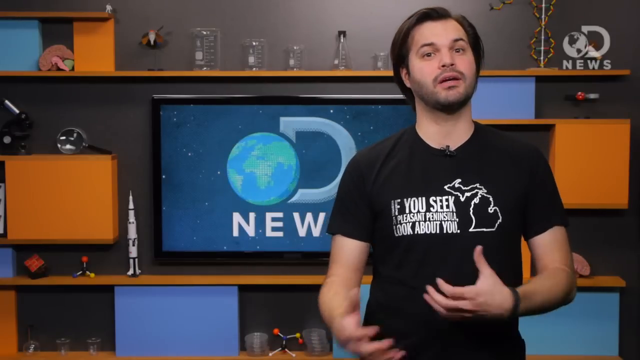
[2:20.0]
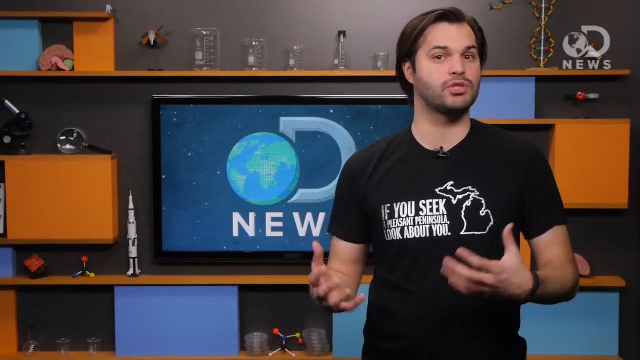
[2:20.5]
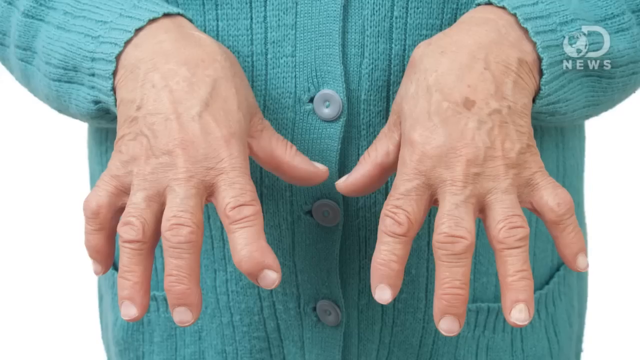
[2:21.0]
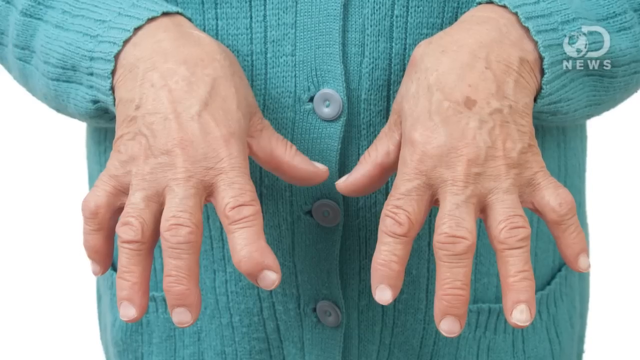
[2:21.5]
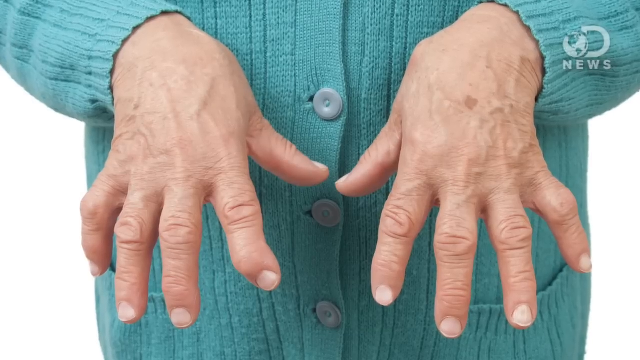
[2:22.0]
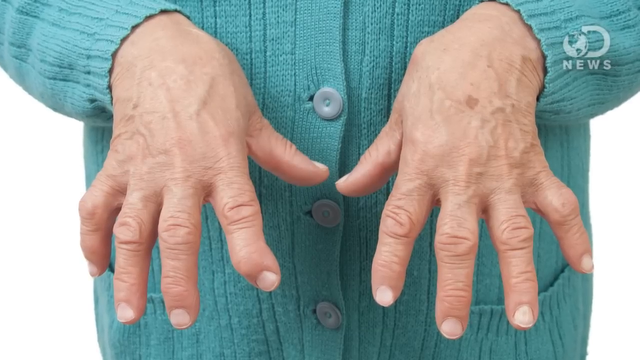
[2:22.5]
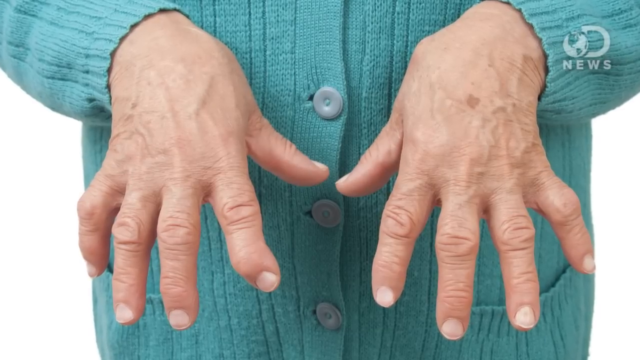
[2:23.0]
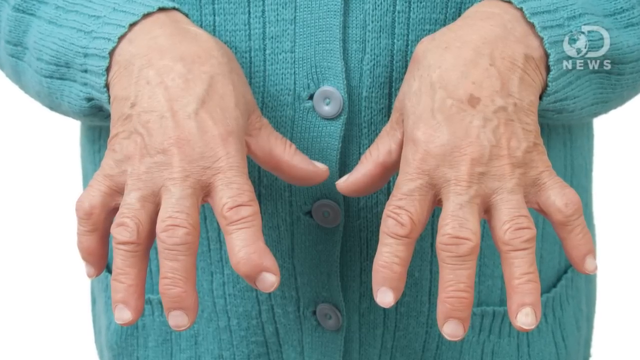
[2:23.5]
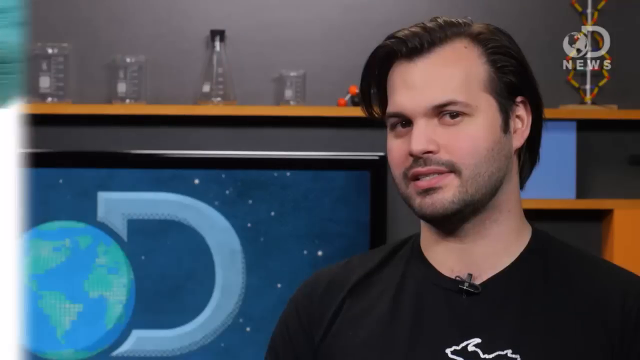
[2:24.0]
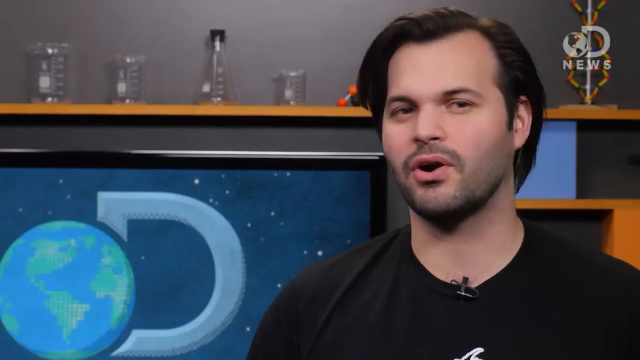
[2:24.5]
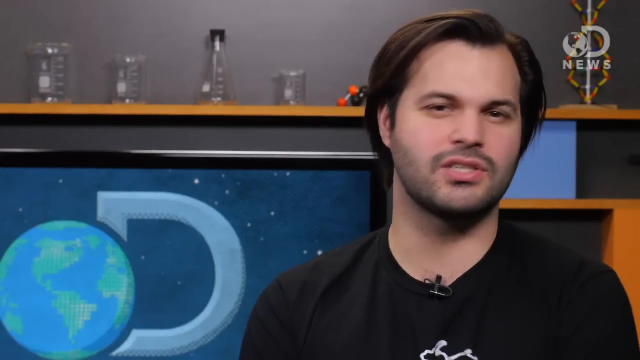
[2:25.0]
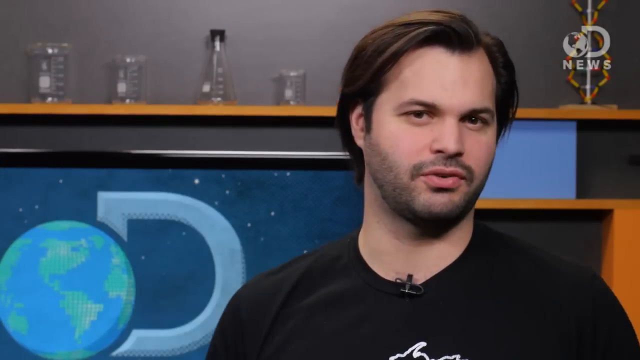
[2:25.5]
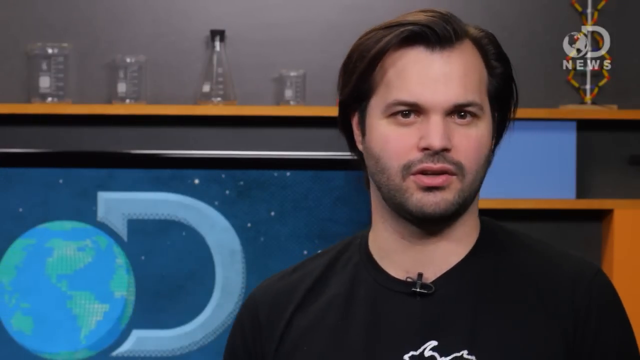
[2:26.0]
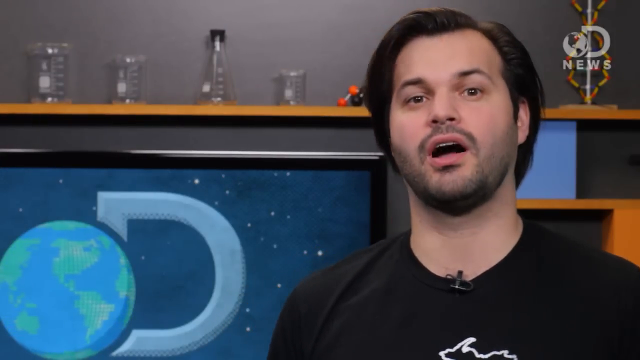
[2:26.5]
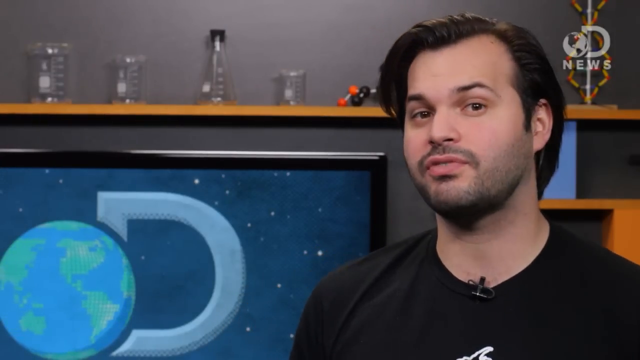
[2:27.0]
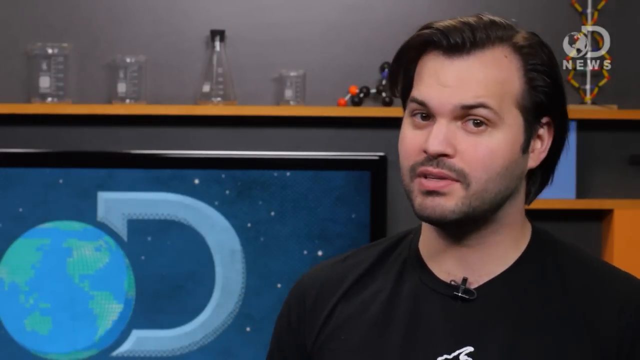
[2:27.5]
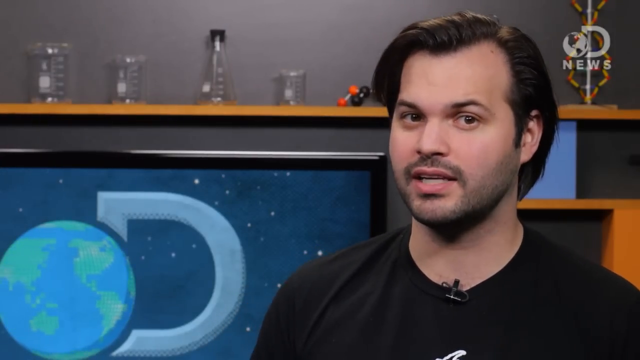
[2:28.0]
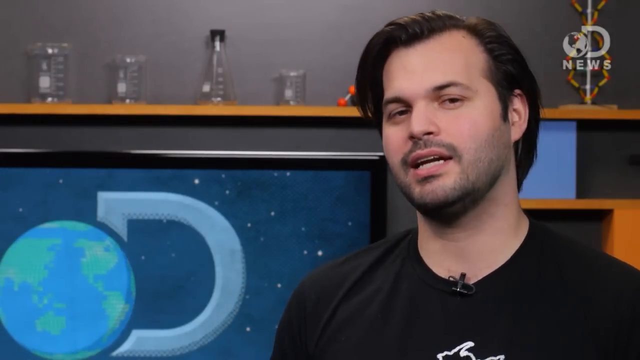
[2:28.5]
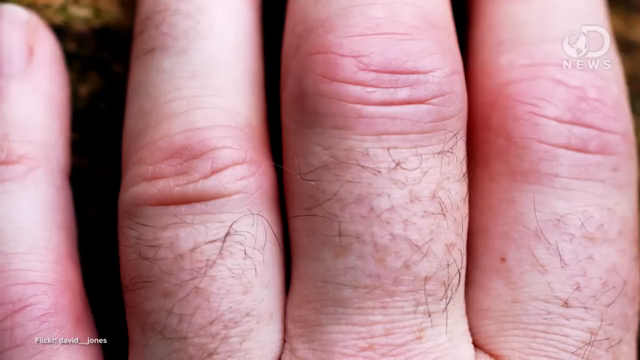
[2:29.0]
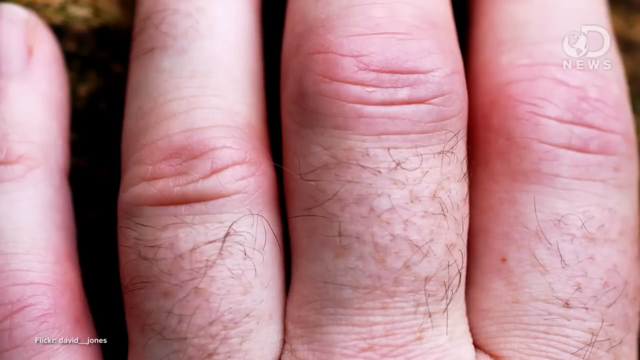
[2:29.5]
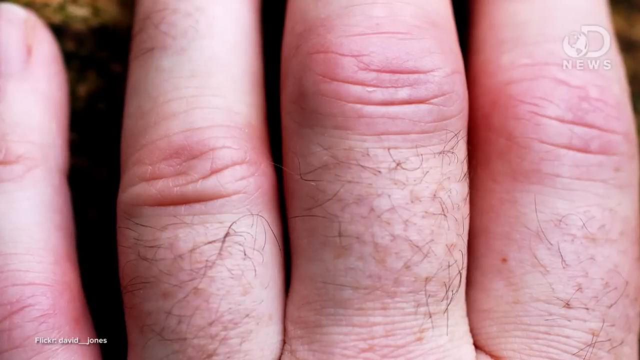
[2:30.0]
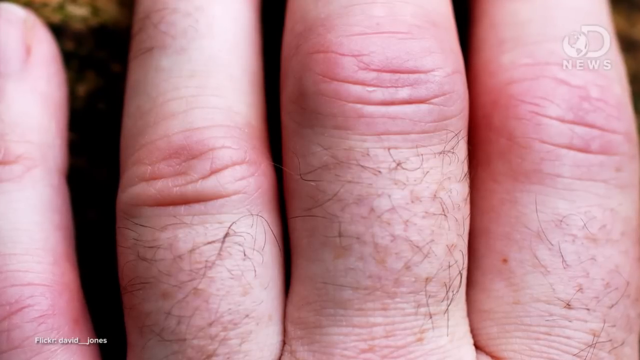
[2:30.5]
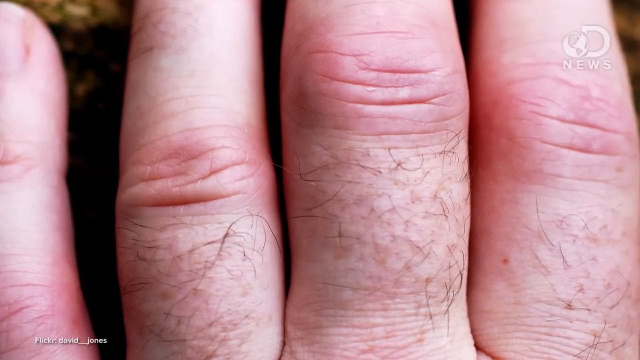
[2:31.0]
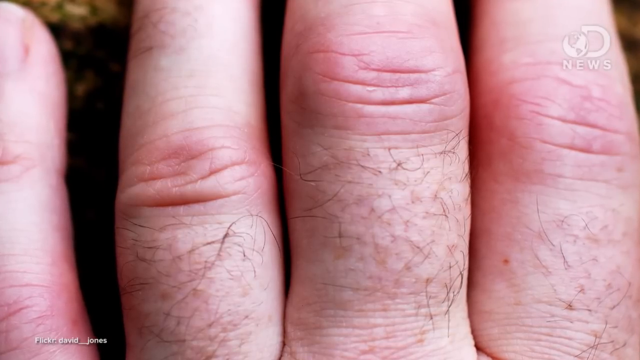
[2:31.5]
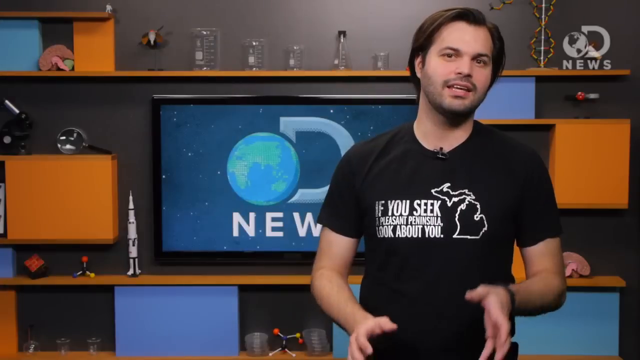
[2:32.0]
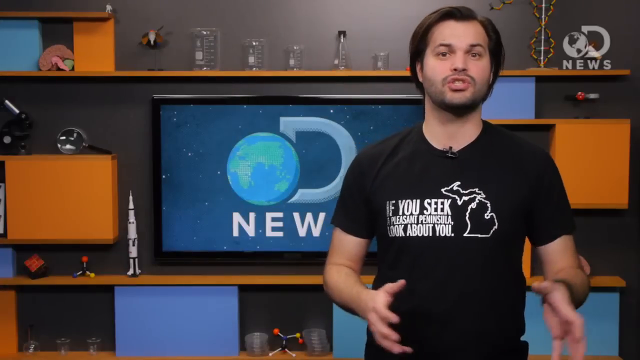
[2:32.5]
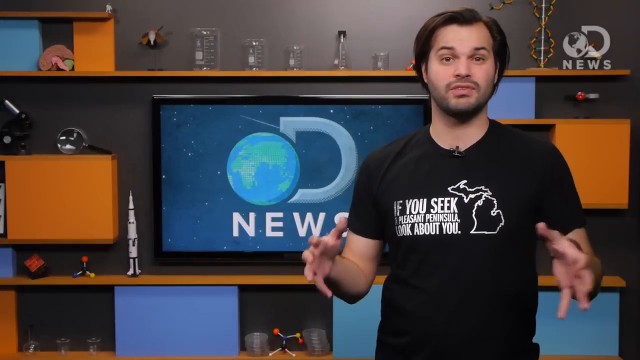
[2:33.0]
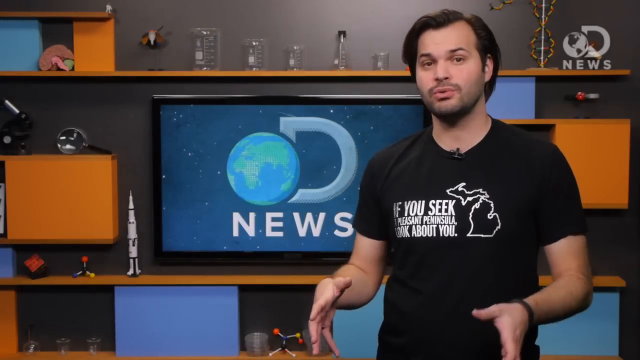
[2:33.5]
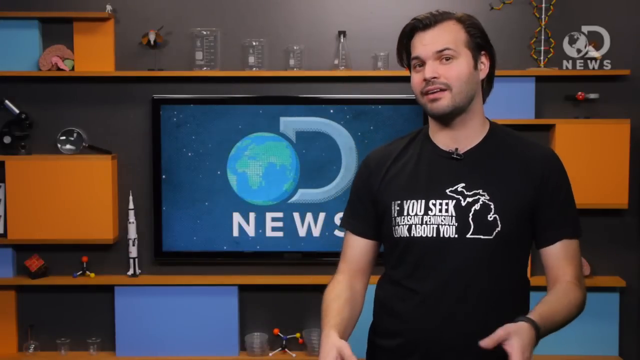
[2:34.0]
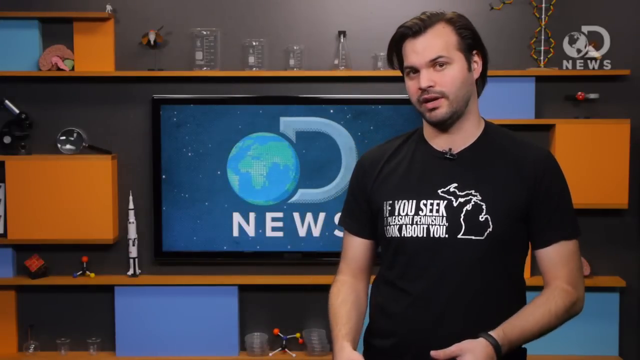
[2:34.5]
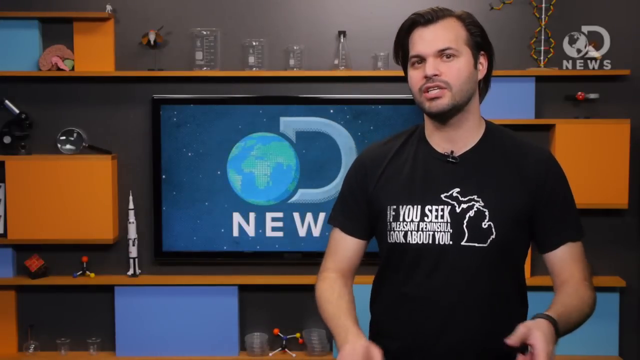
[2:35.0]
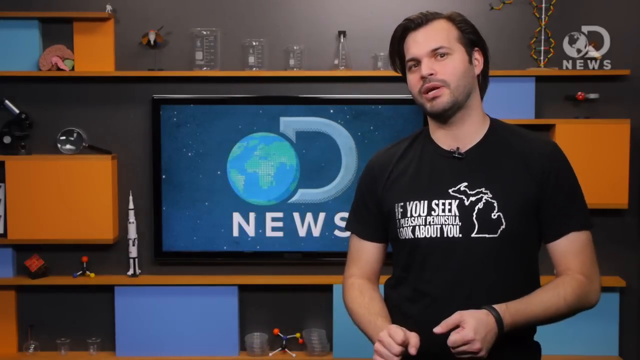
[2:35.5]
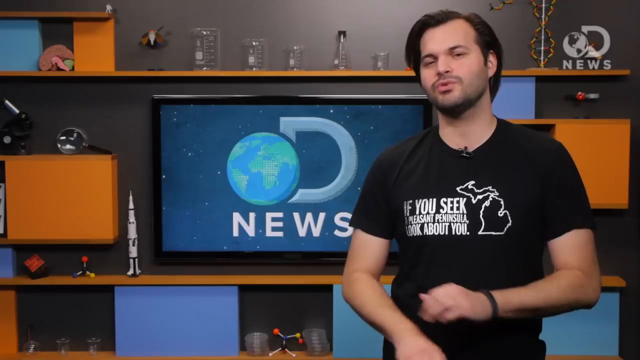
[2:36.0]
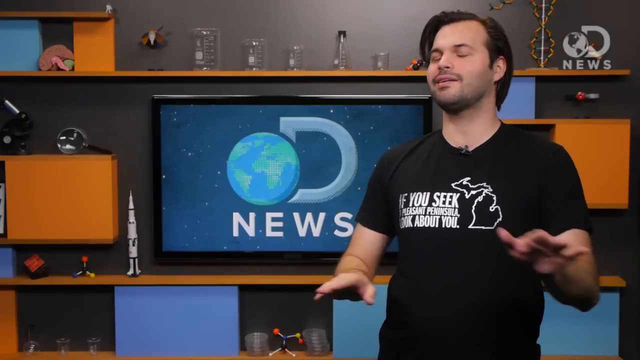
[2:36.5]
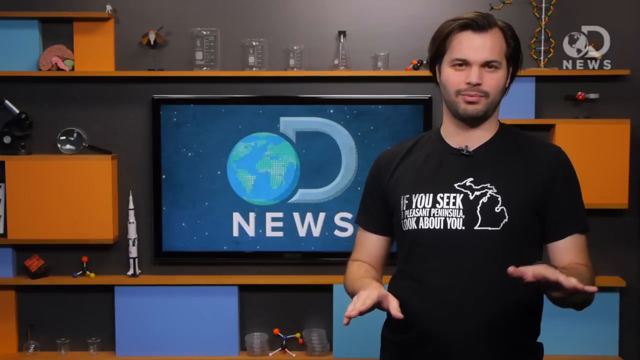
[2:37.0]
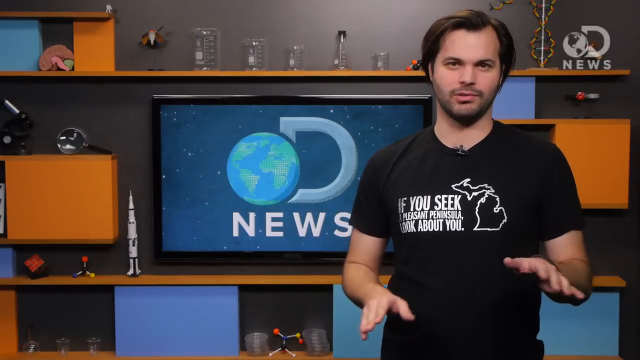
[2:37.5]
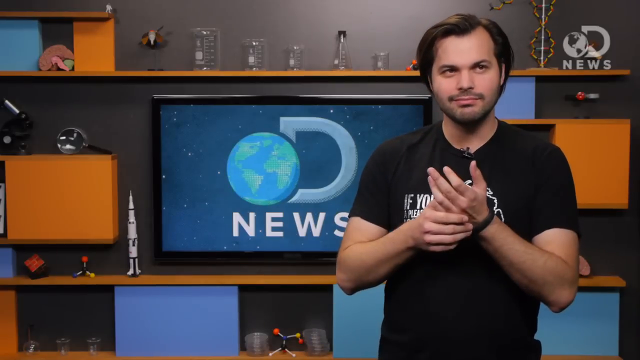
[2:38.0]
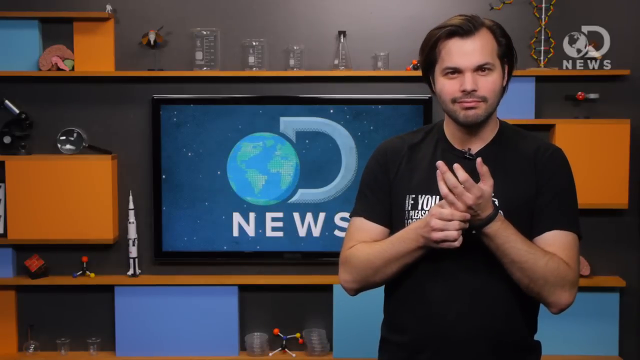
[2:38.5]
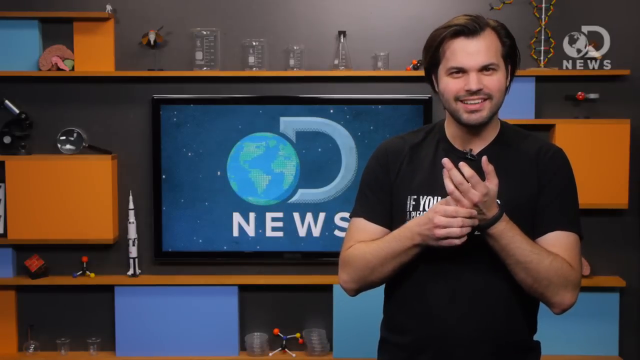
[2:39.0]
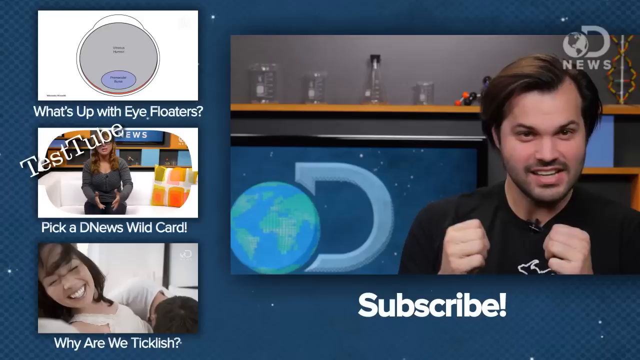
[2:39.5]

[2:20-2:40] Trace, who is young and apparently not even 30, demonstrates knuckle cracking on D News.